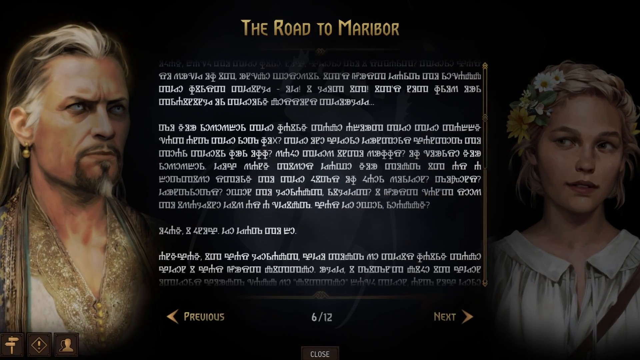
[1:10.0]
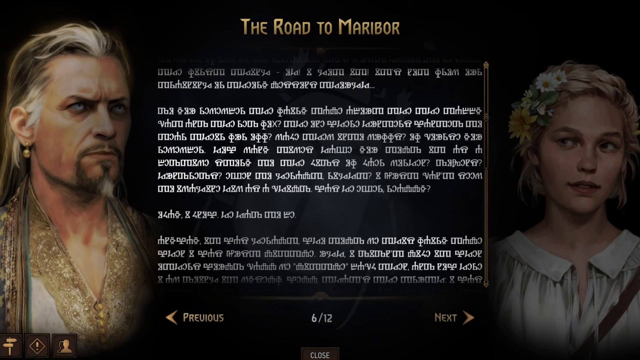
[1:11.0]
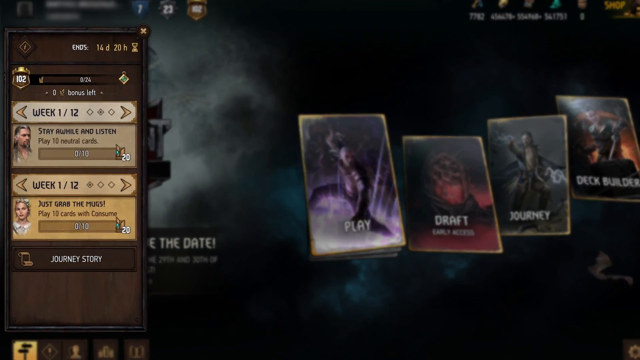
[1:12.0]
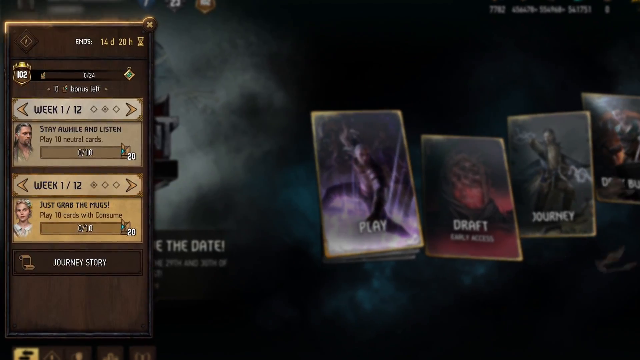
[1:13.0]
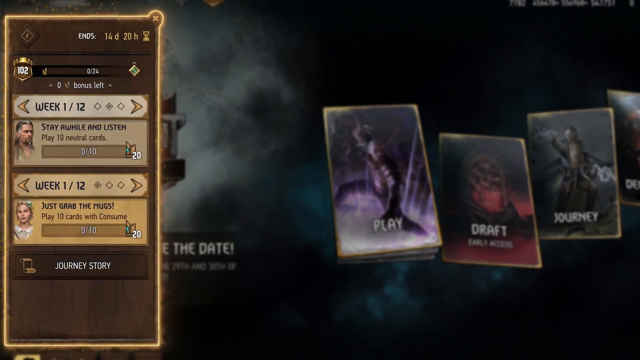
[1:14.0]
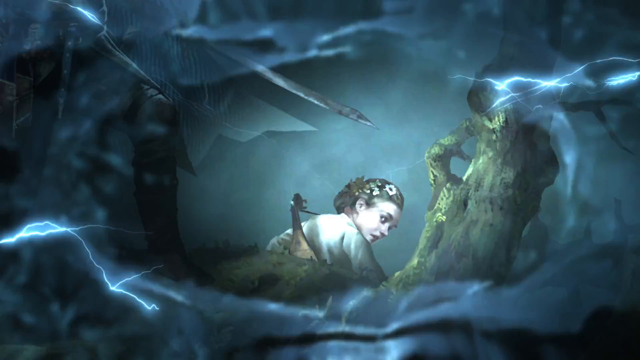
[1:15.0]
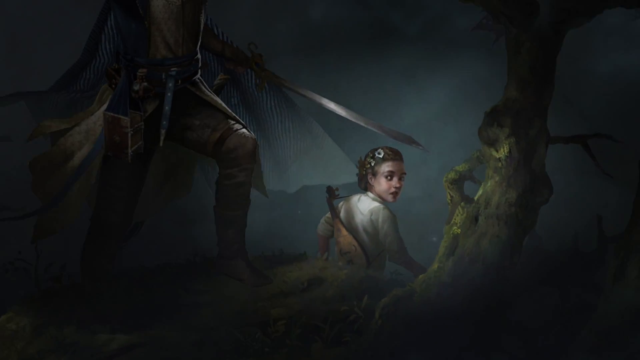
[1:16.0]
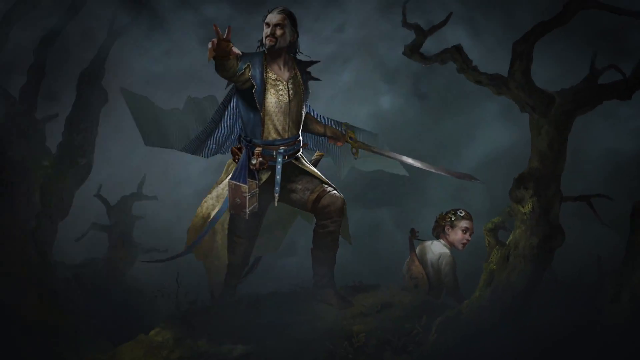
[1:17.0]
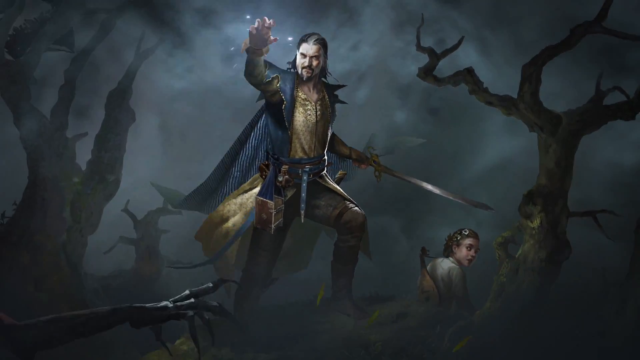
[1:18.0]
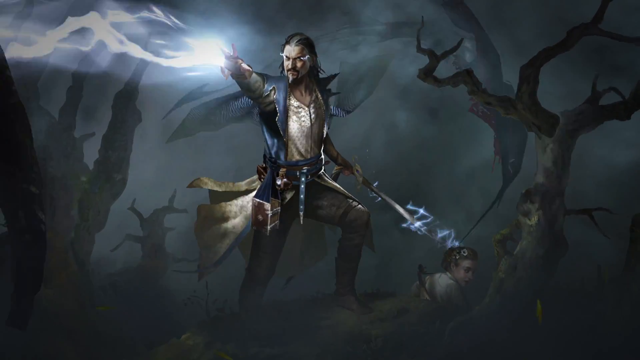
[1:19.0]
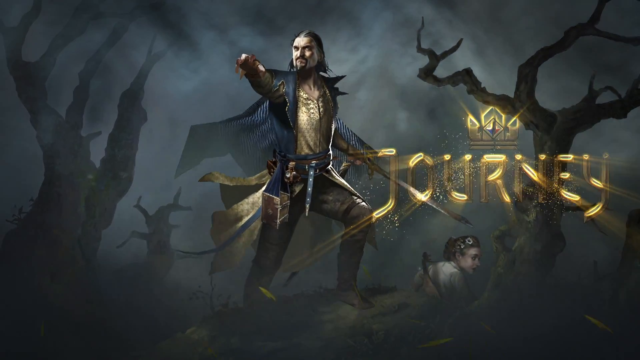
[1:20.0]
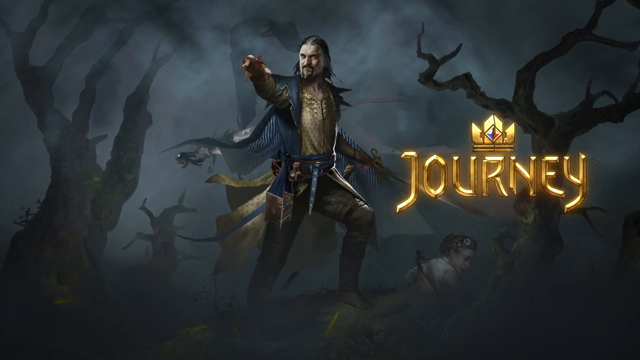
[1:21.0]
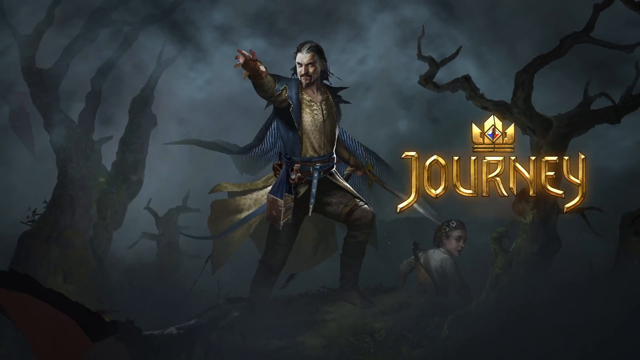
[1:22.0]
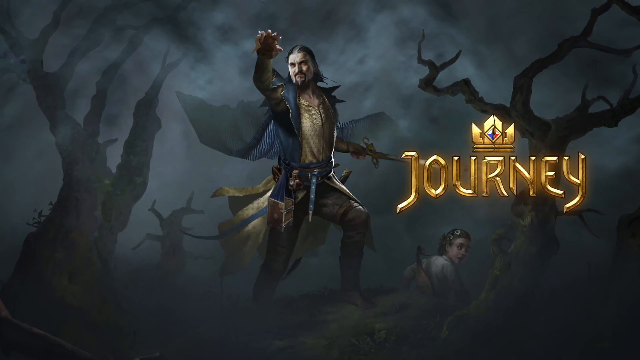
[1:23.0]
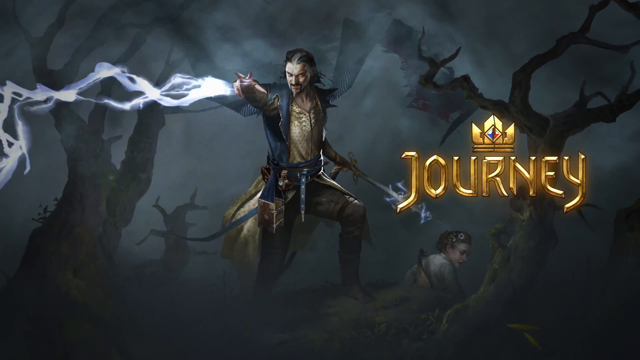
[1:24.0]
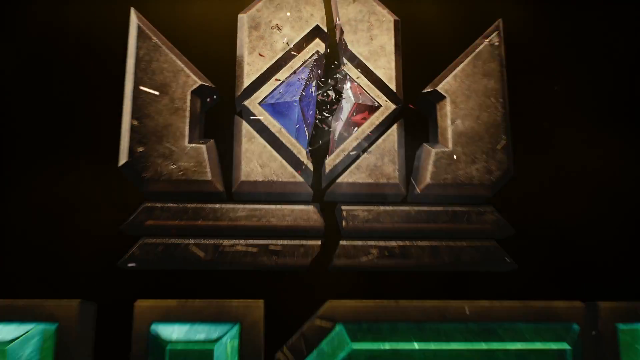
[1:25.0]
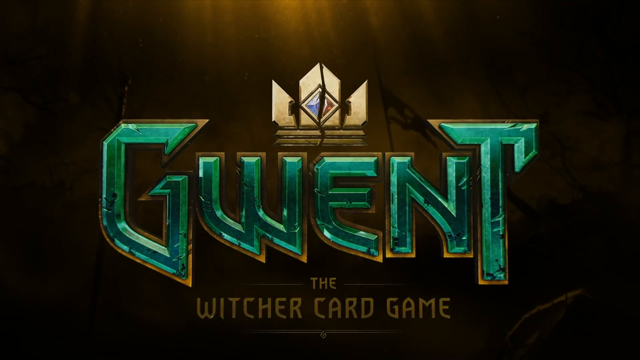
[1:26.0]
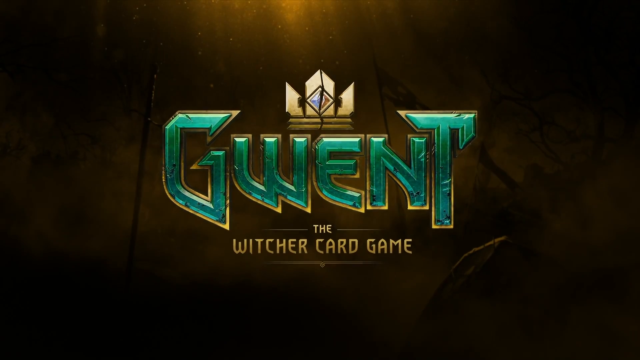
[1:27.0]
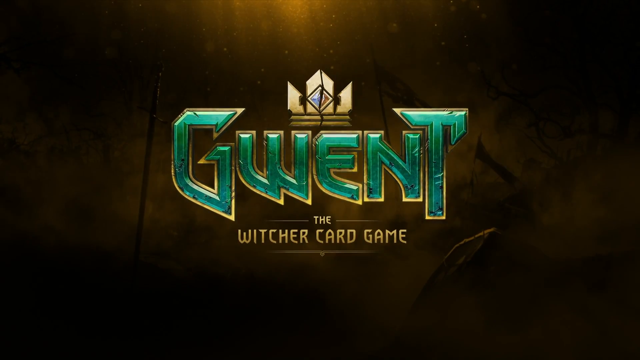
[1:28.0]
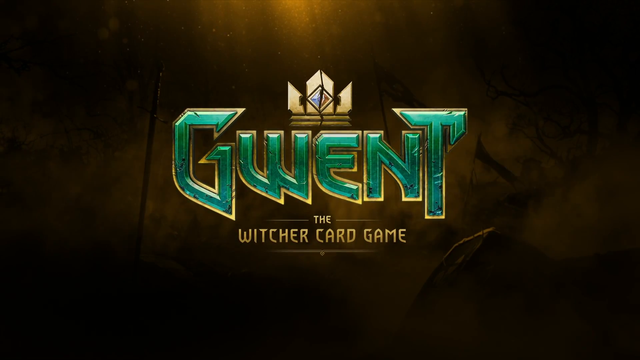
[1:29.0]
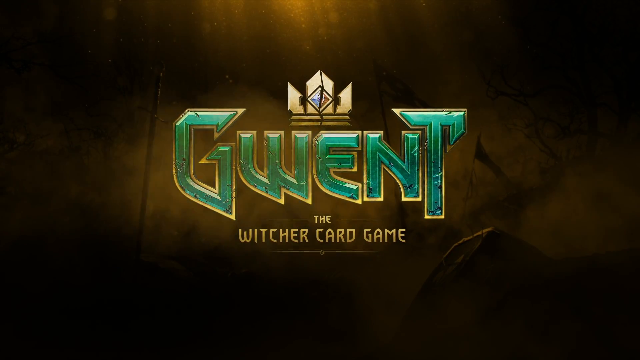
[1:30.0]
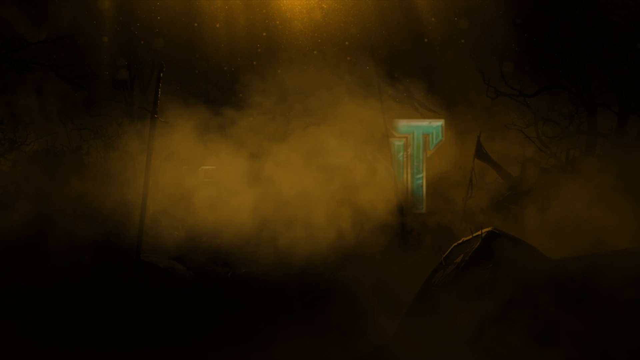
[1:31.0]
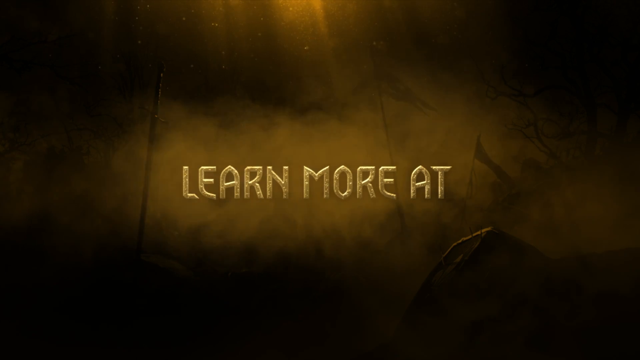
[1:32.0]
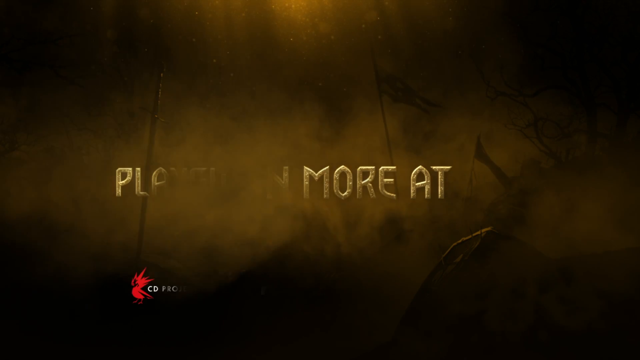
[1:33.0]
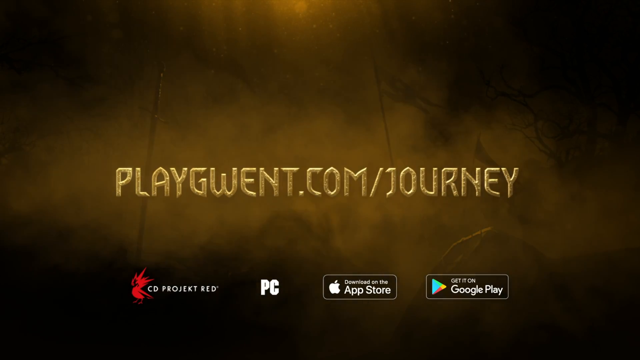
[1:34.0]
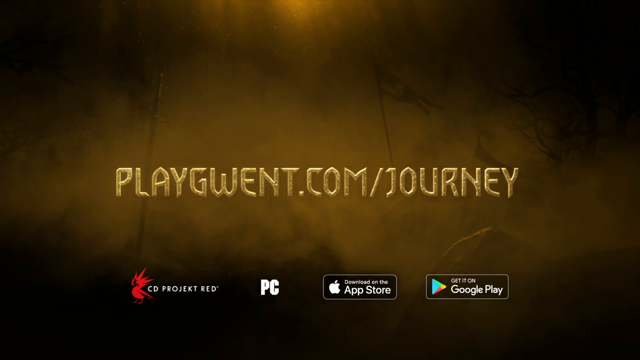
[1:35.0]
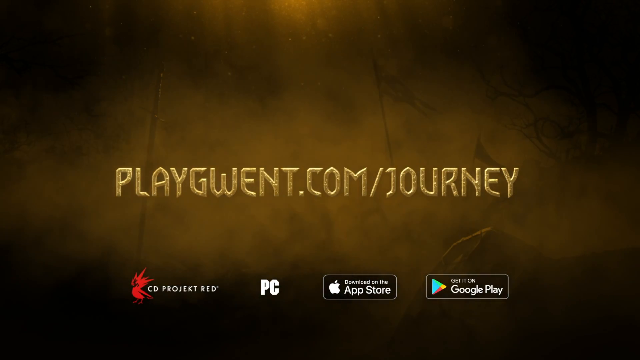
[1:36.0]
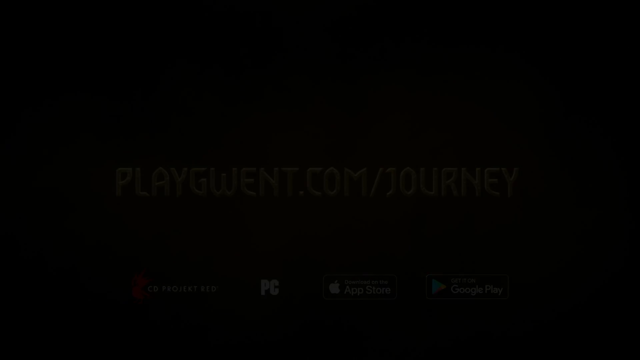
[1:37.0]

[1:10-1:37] The trailer for the mobile game Journey, which uses cards featuring characters, spells and more, shows an older man on the left of the screen with white and black hair and a goatee, wearing earrings and gold and white attire. On the right is a young woman with braided hair and flowers in her braid, wearing a white or blue dress. Both are Caucasian. Four cards appear in the background, reading "play", "draft", "journey" and "deck build". The video zooms in on one part of the screen showing different tasks or quests the player can do and the weeks in which they can be accomplished. Blue lightning appears on screen as it transitions to an animation of the player character wielding a sword, wearing a blue cape and extending his right hand outward. Behind him is a young girl with a flower-styled hairstyle. The game's logo then appears, seemingly reading "Journey" in gold. A mythical creature flies around them, and they are in a dark, dreary forest with dead trees and fog. The player character shoots lightning at the enemies. At the end, the name of the overall game appears: "Gwent the Witcher card game".